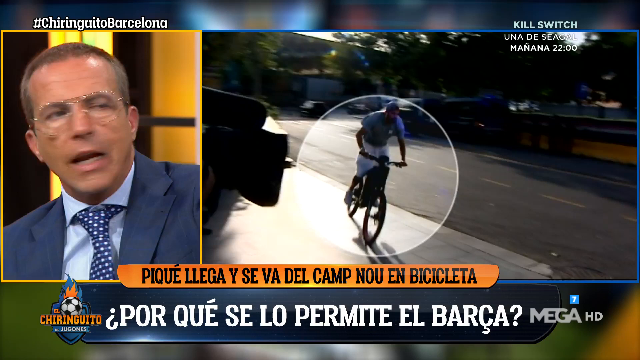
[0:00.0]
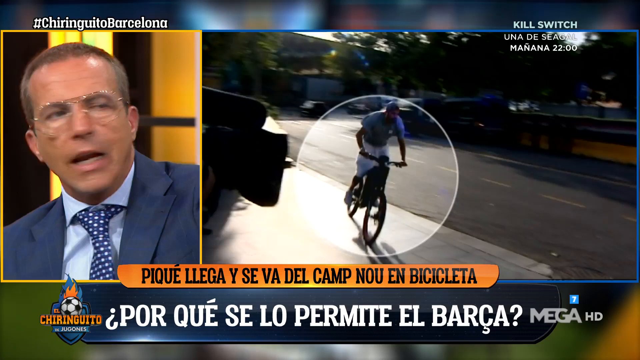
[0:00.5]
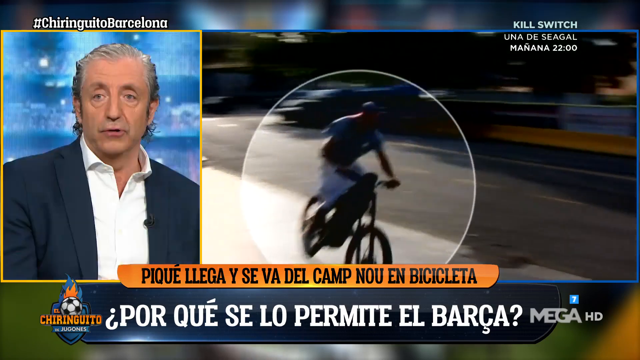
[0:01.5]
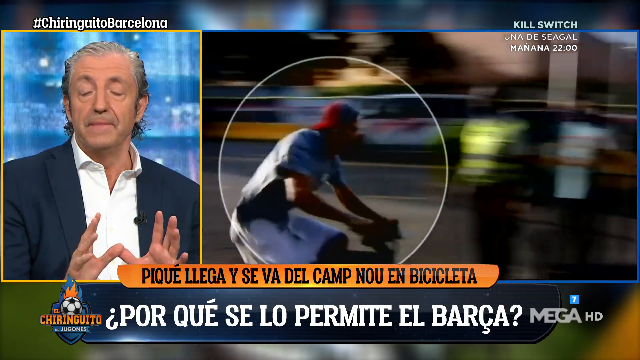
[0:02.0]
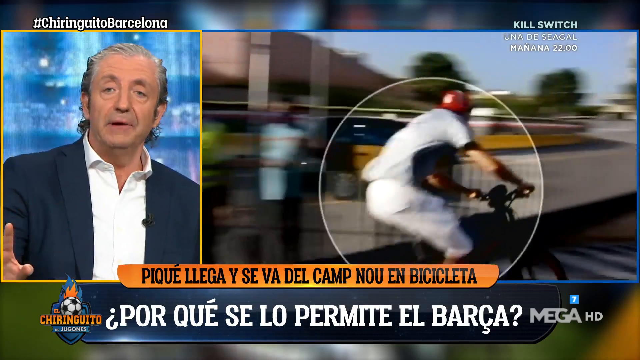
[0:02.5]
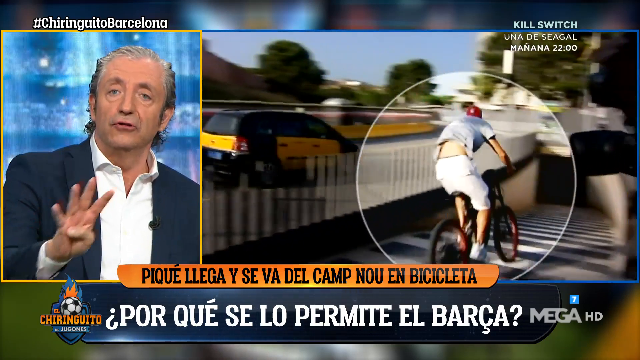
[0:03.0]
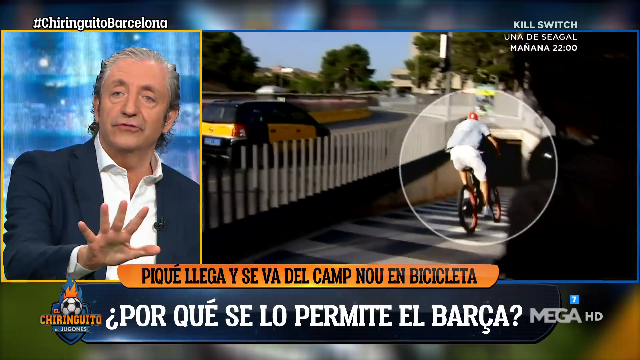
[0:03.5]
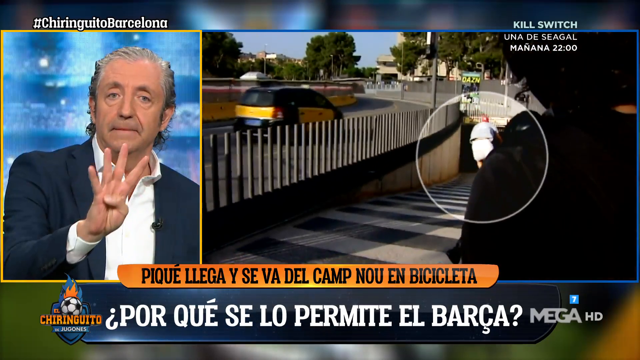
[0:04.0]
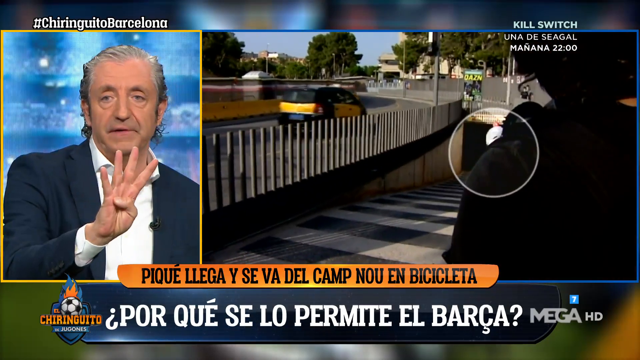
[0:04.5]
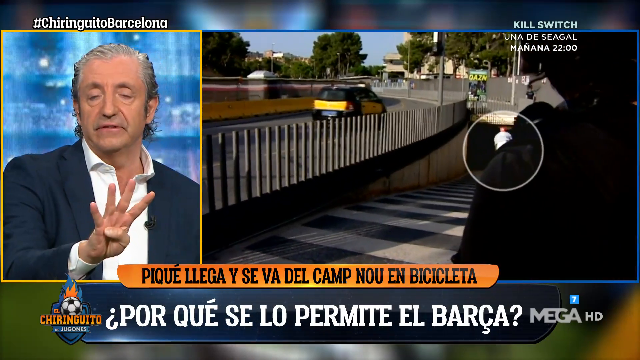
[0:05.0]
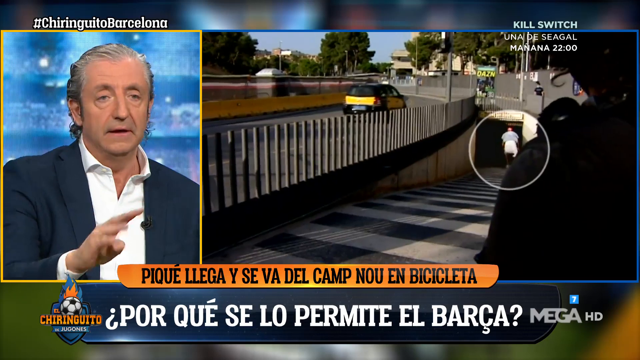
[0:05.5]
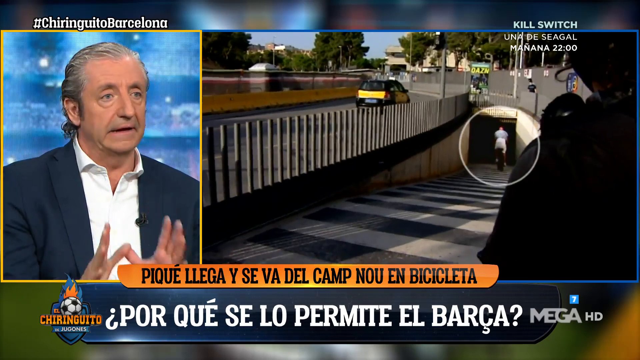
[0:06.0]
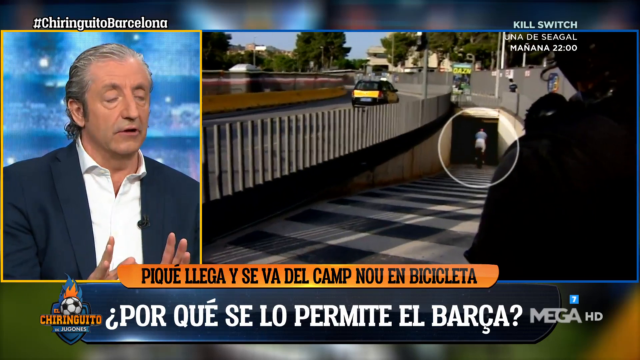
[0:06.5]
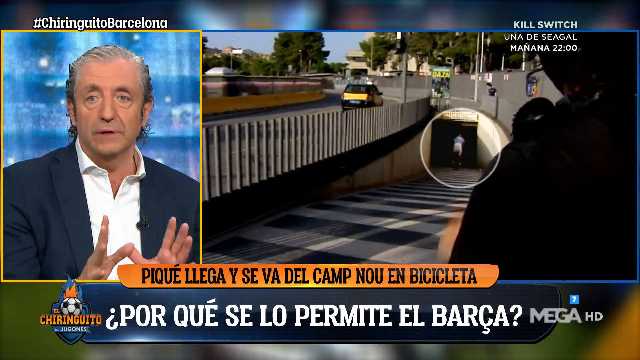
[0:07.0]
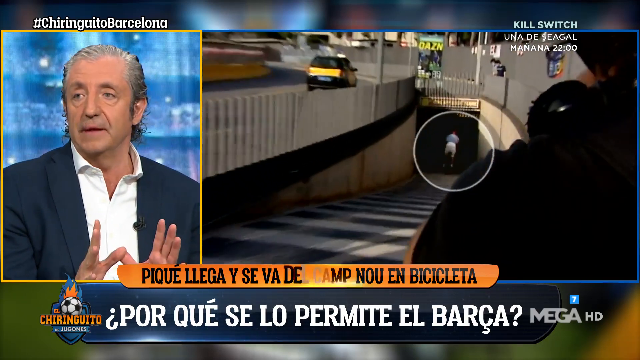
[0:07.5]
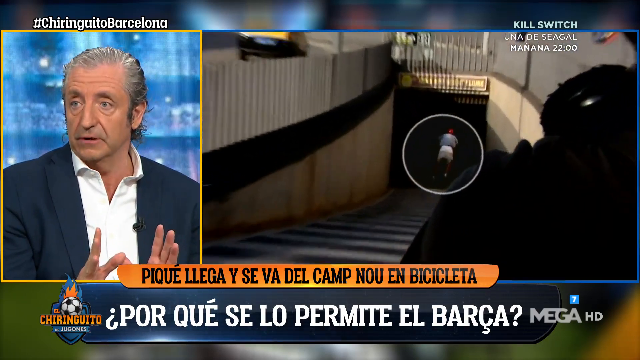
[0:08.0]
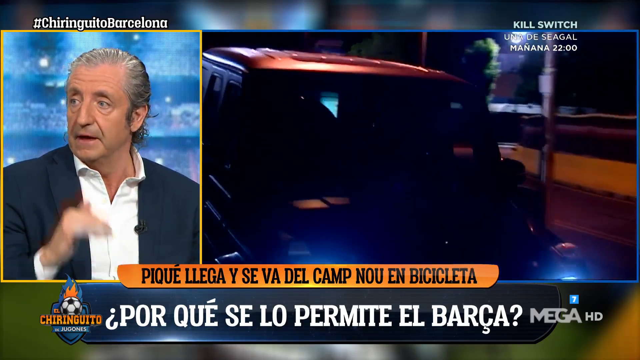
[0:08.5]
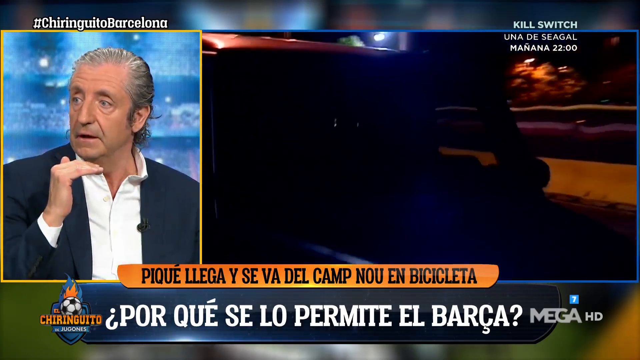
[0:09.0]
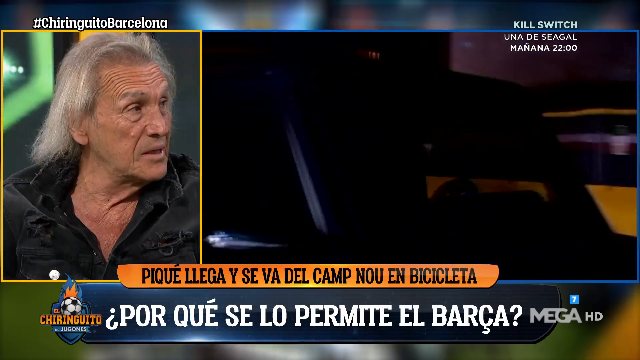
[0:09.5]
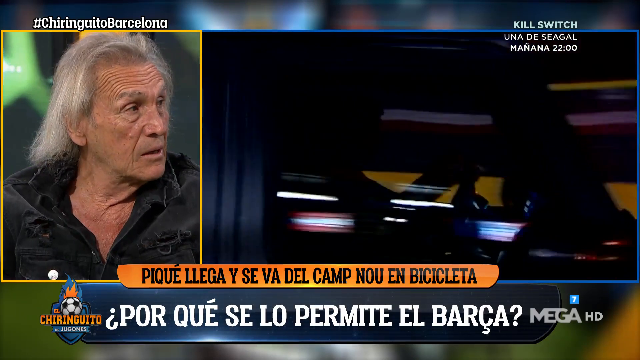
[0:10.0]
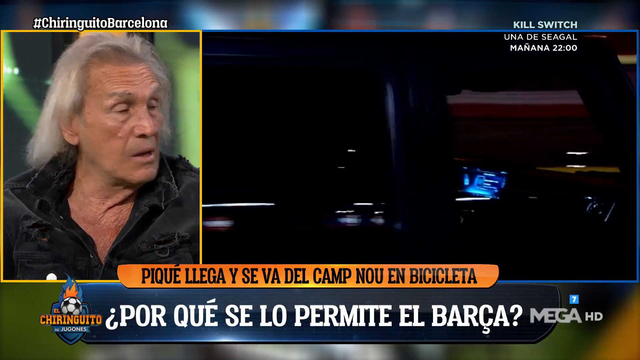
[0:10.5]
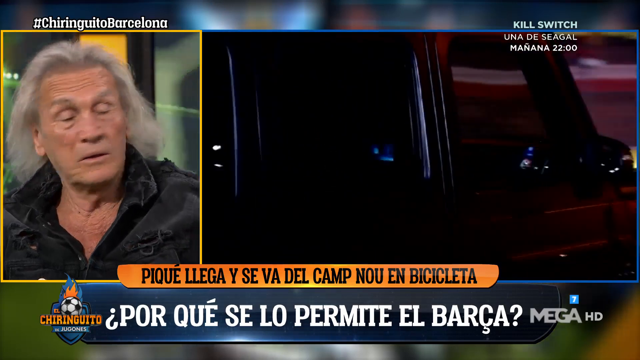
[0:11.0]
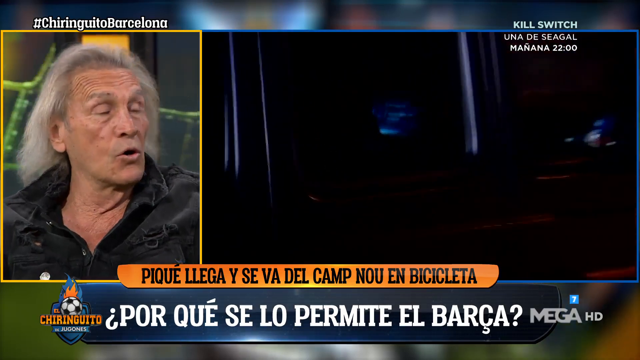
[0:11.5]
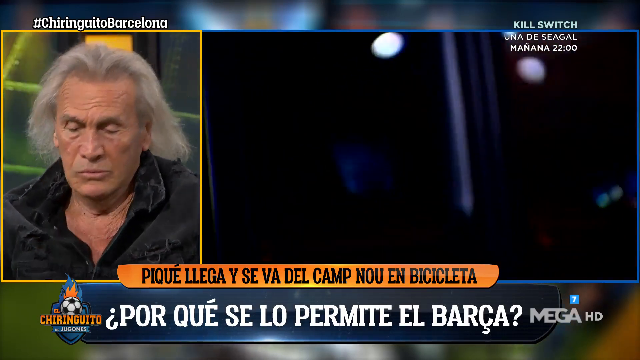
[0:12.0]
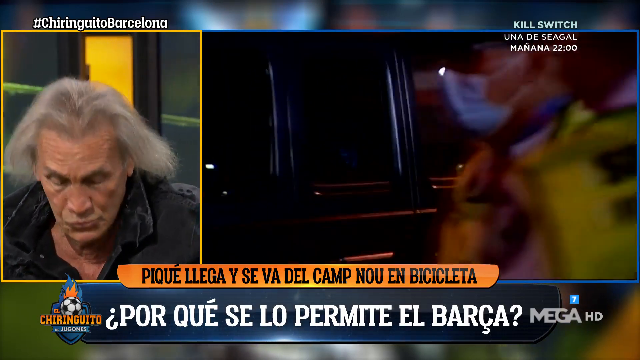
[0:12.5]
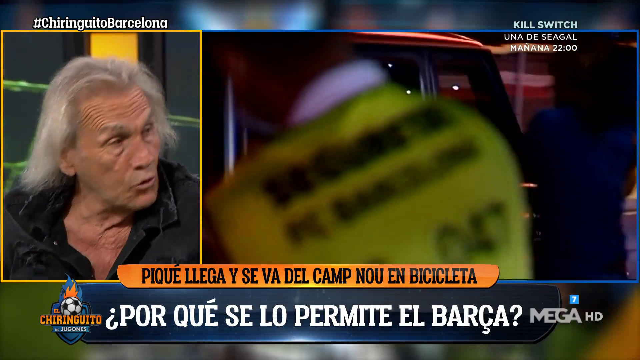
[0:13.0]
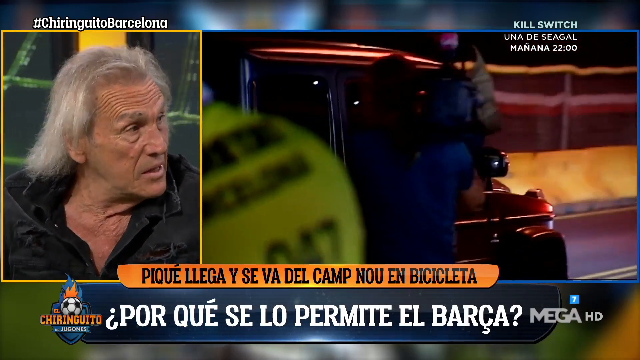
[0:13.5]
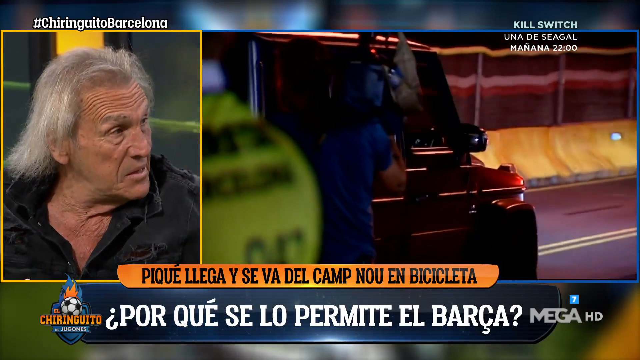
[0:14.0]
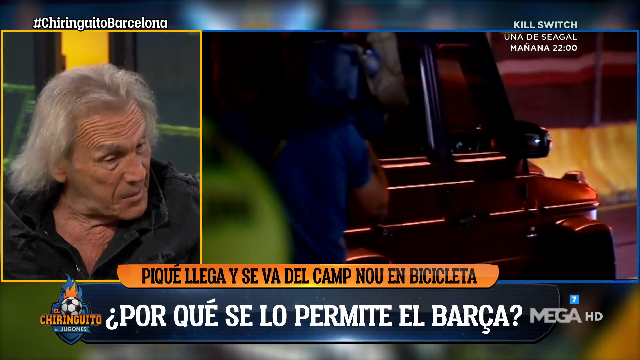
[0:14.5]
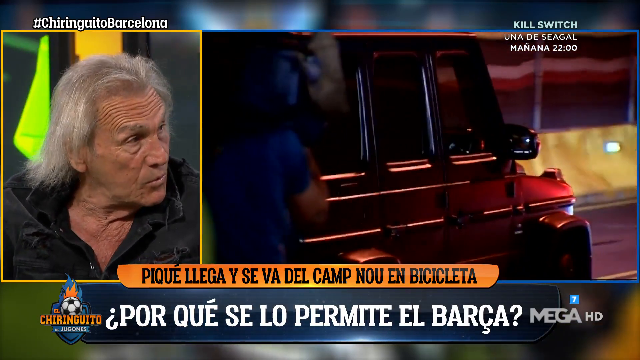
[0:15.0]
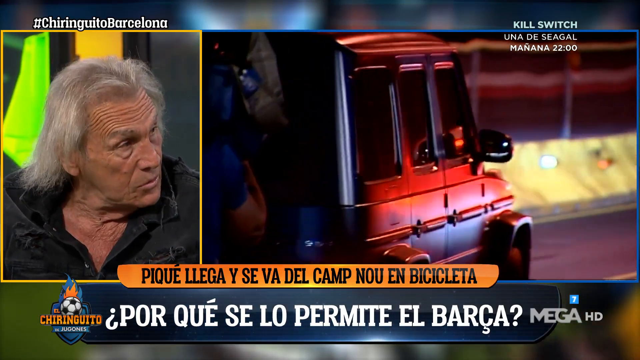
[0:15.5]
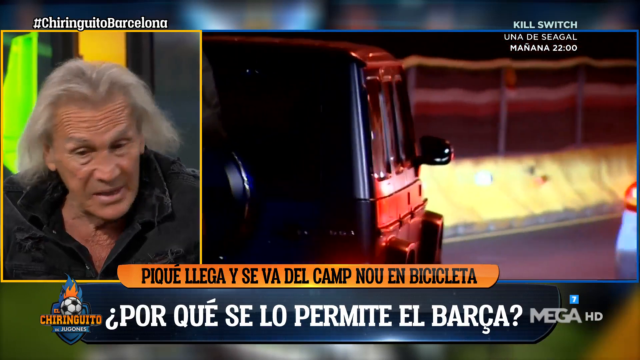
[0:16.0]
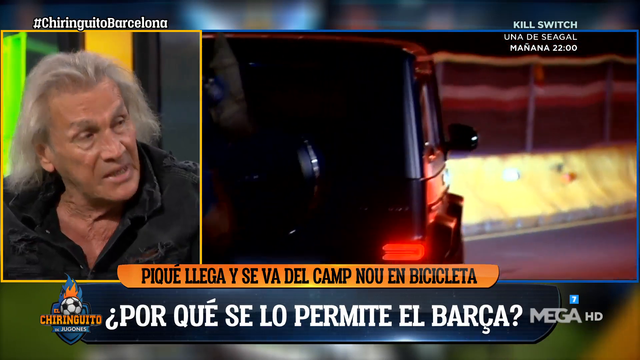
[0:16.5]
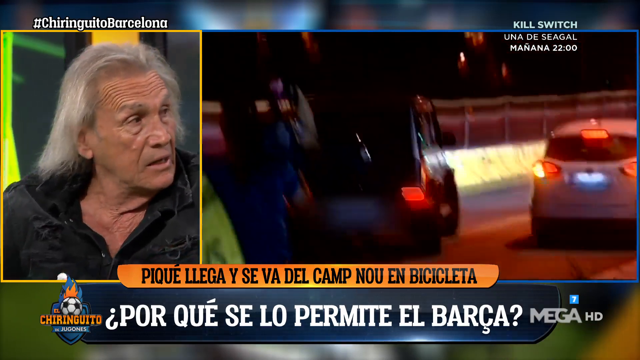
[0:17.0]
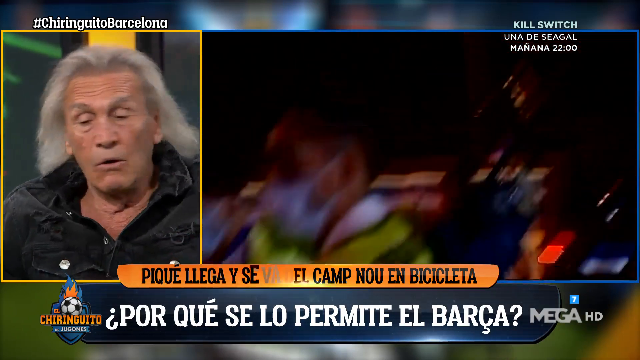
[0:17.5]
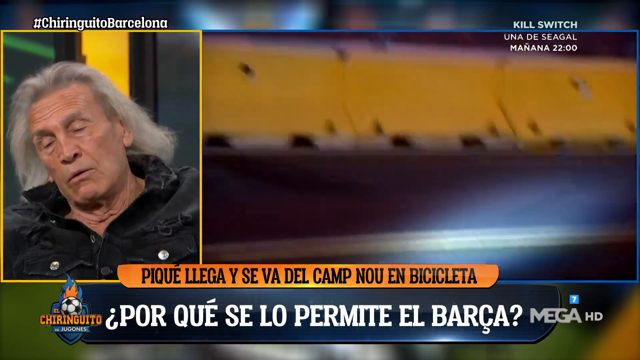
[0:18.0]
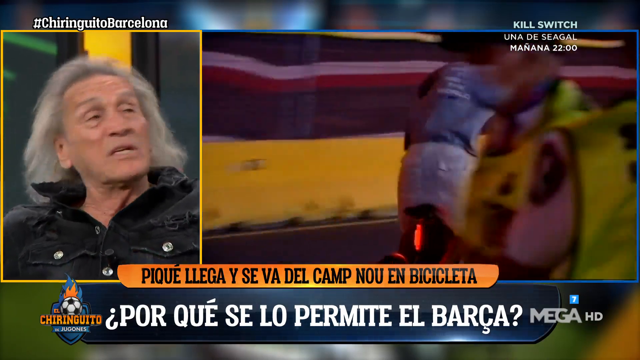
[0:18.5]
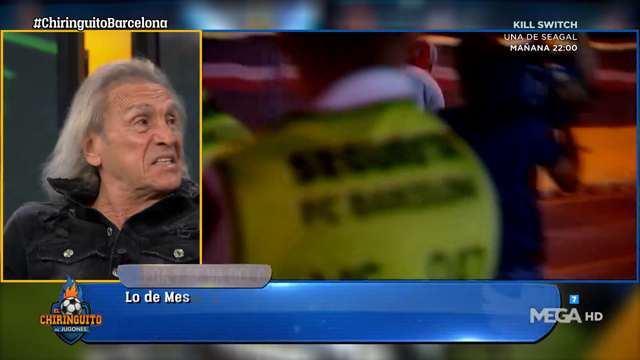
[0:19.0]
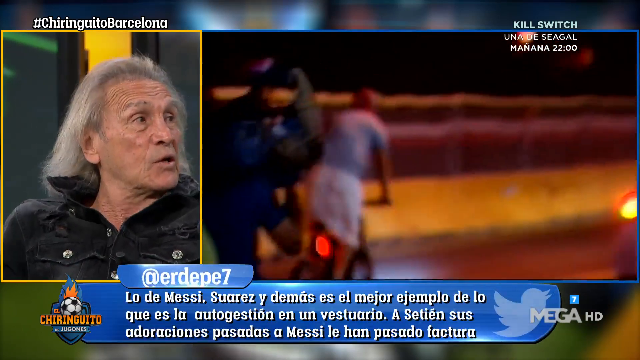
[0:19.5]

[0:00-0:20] A news report appears on a split screen. In the left panel, a man talks with another man, with the news reporters talking there. In the right panel, a person rides a bicycle down the street, coming from the left and moving to the right, then going down a ramp toward a tunnel entrance. The tunnel appears to be like a city subway entrance, or possibly a pedestrian tunnel running underneath the road. The rider heads into the tunnel entrance. The next scene on the right shows a black SUV driving from left to right, and the same bicycle rider then rides up behind the SUV.